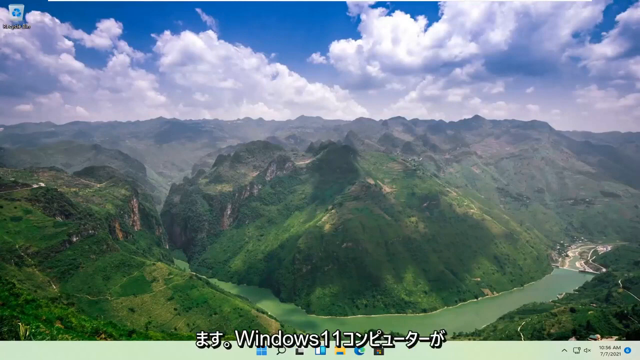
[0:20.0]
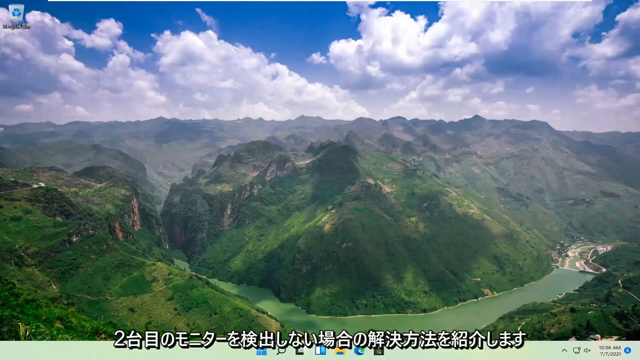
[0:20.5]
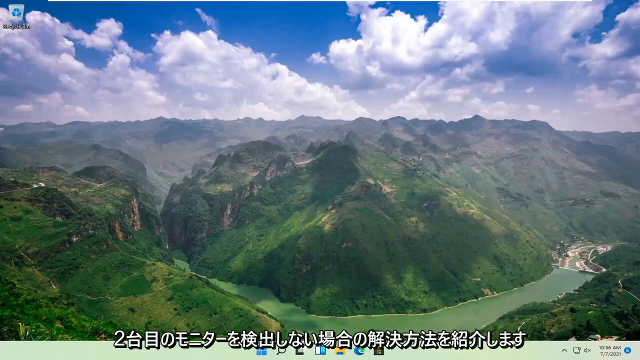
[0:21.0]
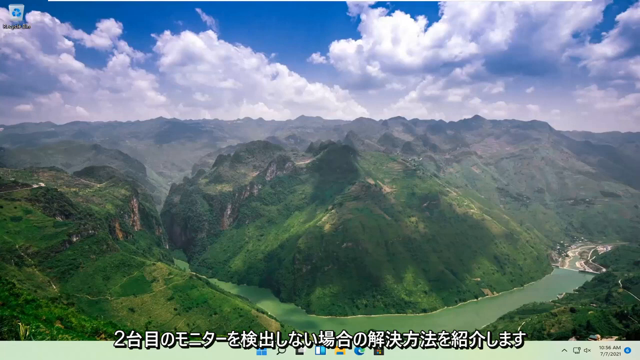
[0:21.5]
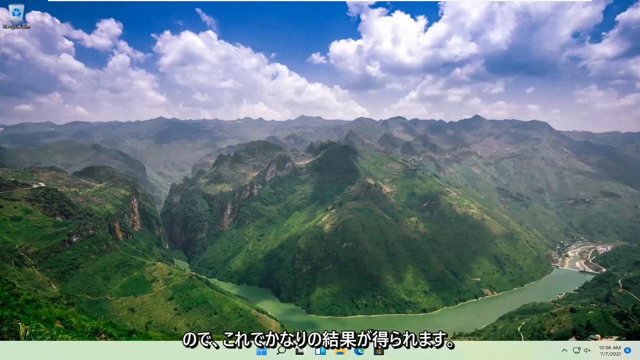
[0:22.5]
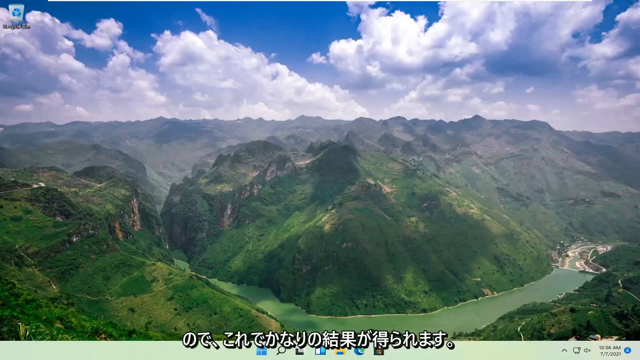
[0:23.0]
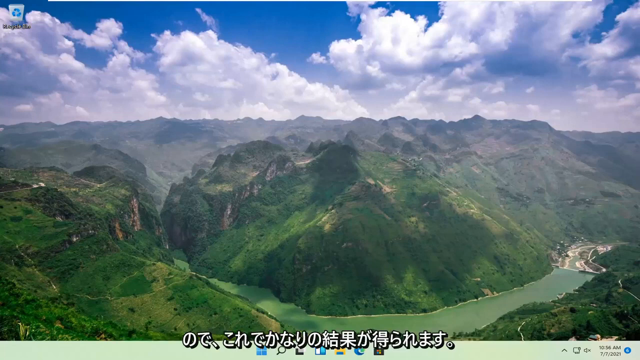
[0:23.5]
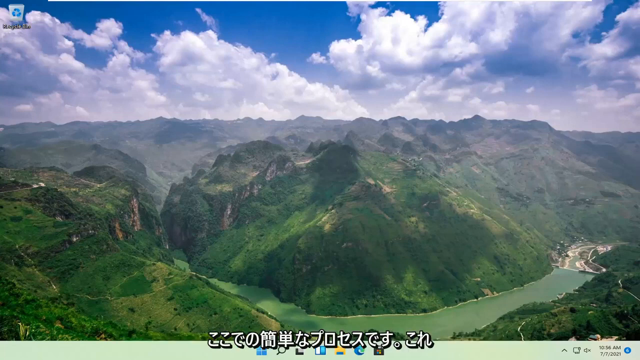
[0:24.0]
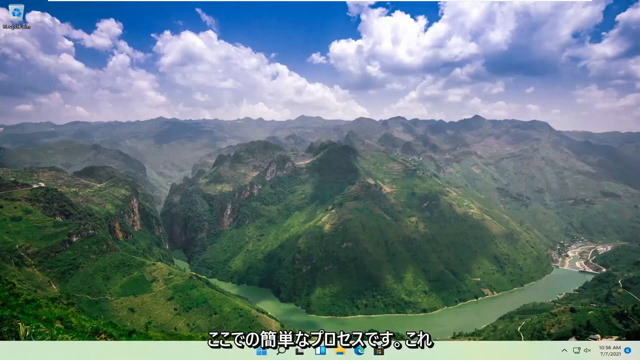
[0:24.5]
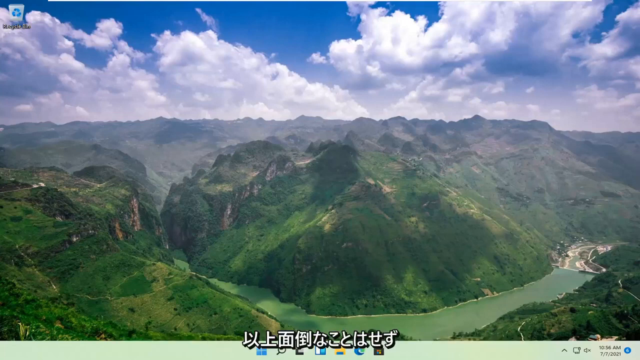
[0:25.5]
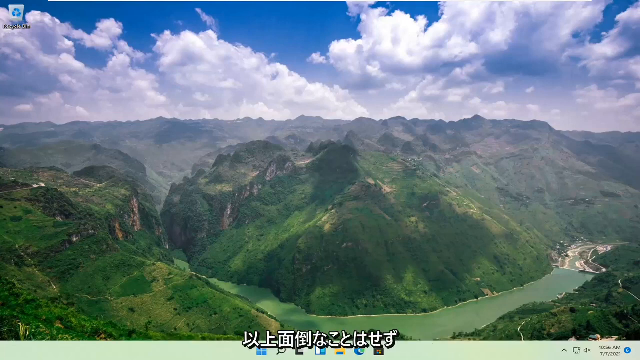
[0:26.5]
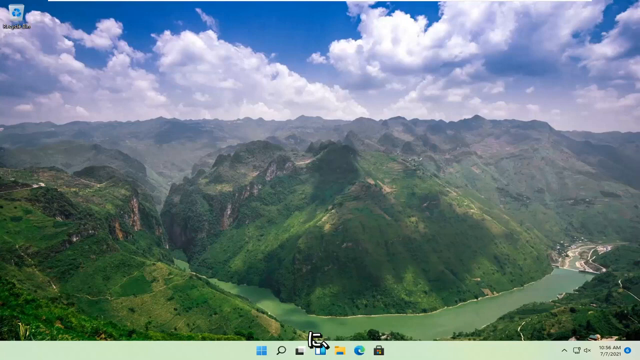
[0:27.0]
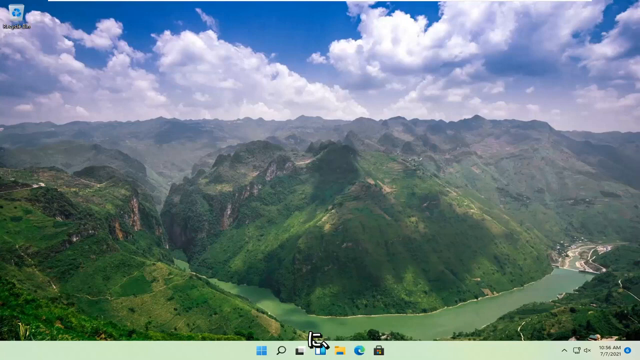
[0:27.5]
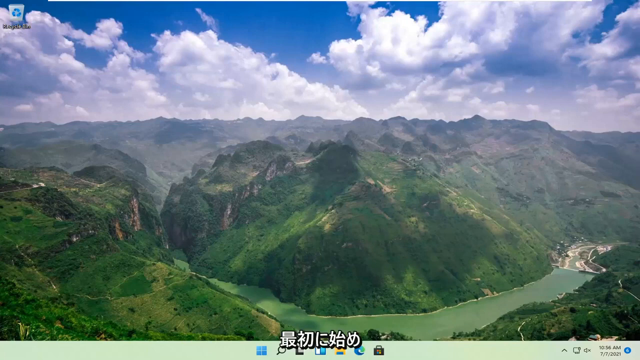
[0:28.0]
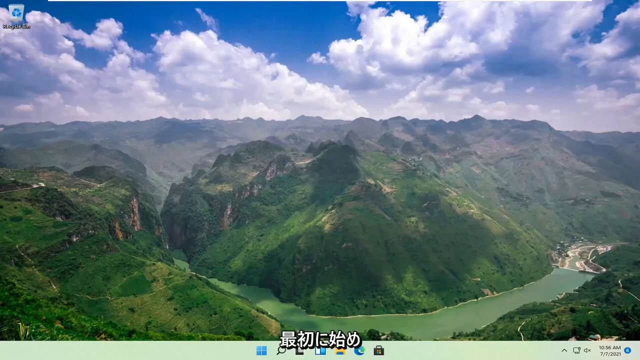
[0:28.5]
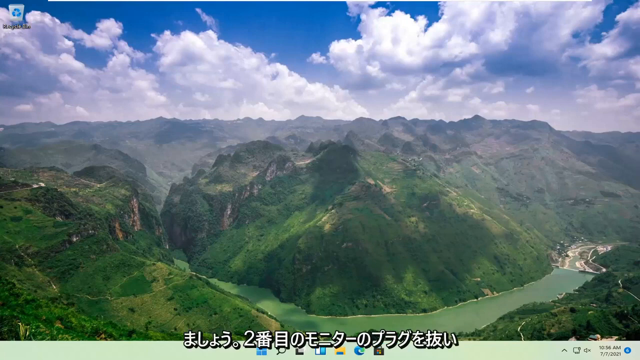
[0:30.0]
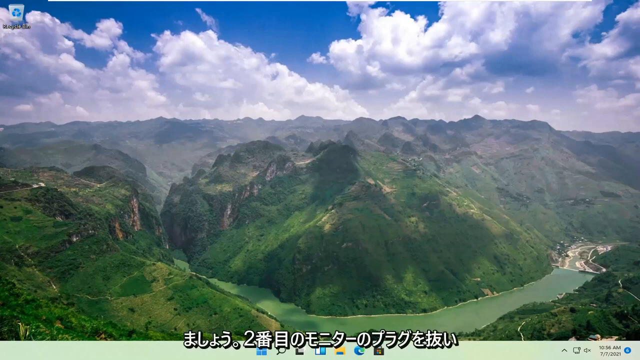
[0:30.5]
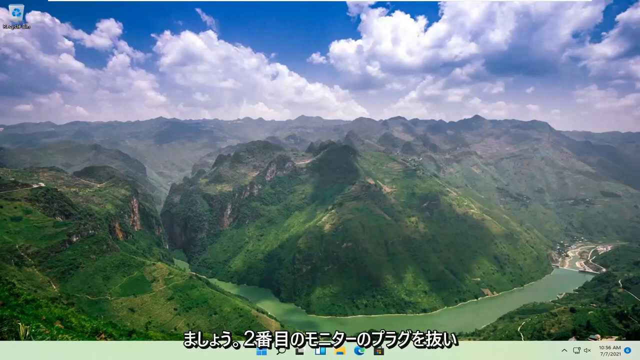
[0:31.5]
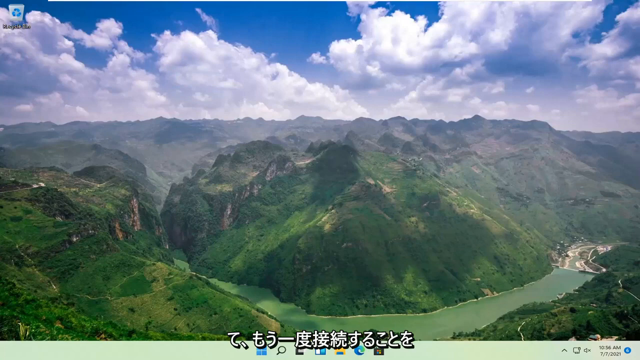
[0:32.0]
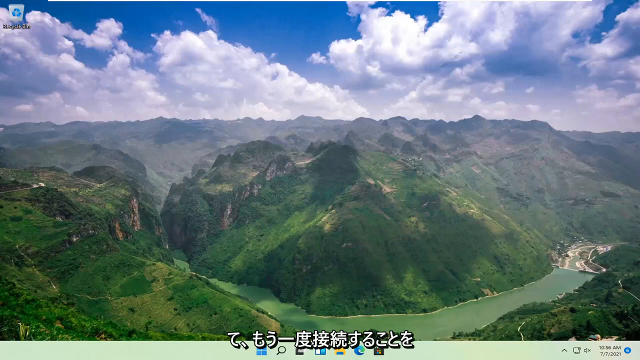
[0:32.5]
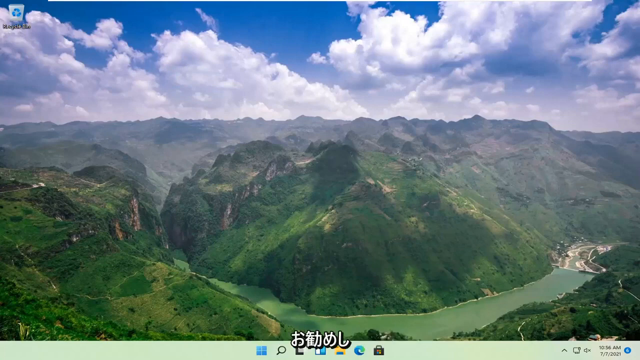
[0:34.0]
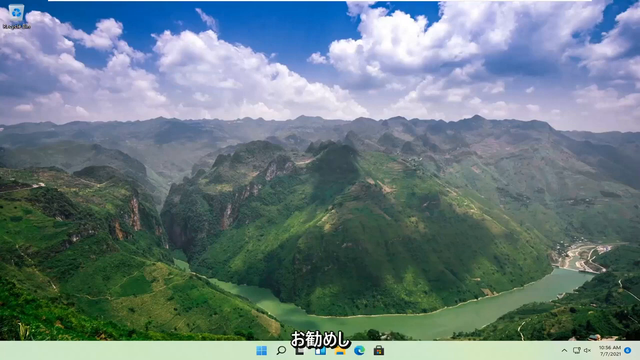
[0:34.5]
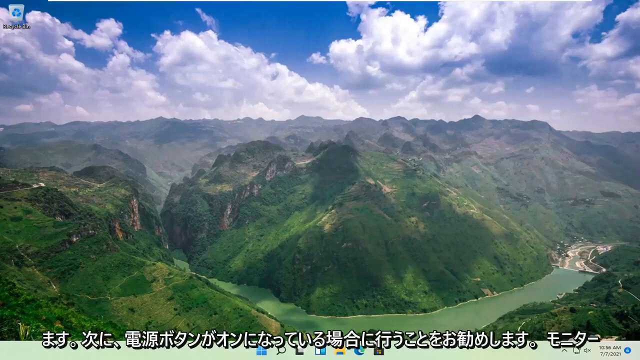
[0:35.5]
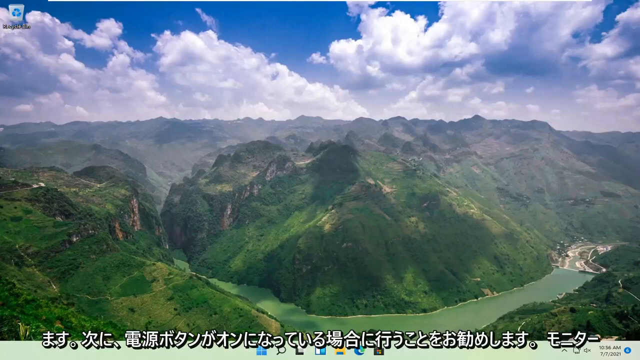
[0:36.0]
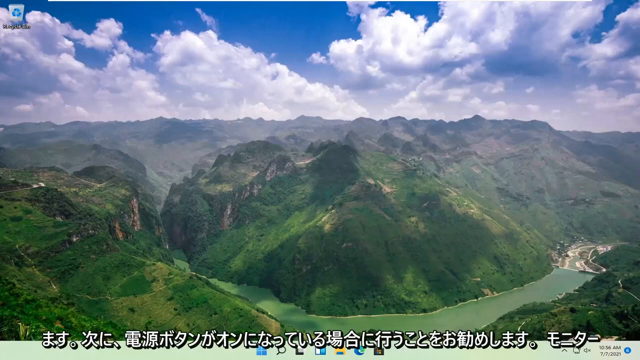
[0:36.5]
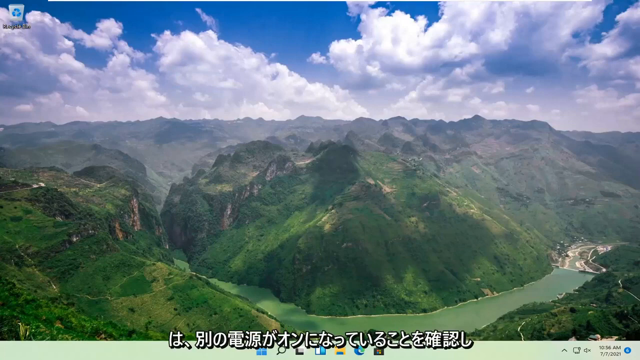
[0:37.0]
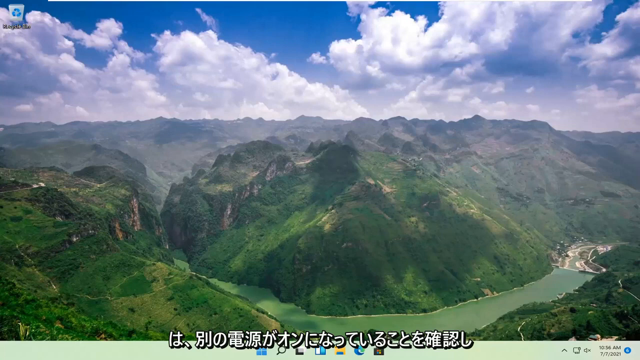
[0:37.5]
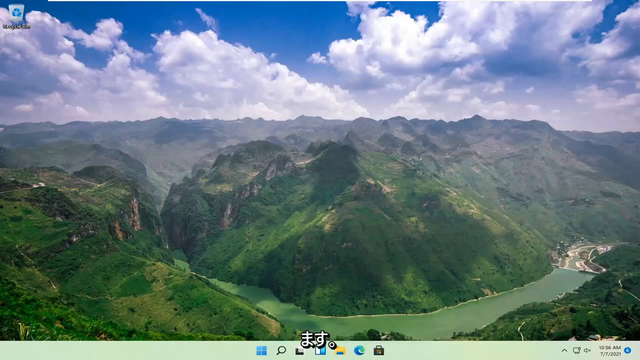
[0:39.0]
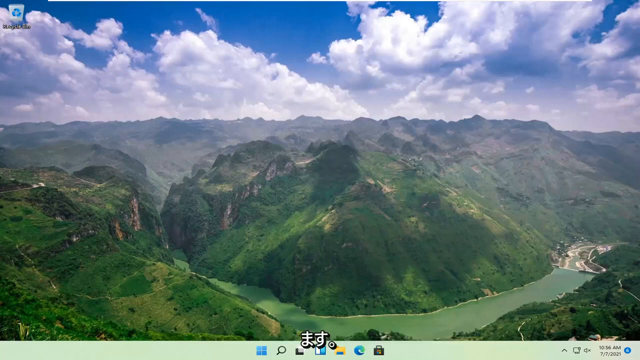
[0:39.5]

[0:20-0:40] The same shot of the mountains continues. It appears to be taken from a person standing at the very top of one of the hills. The hills are all green, with no snow, and the mountains on the horizon are a lighter shade of green. The sky above is blue but very cloudy. What looks like a river runs through the mountains where they are separated. Computer logos are visible at the very bottom of the screen, with seven logos in the middle, among them Microsoft Edge, Folders, the Windows logo and a magnifying glass. The volume and the time are still visible on the right-hand side. There are no people, and the setting does not change.